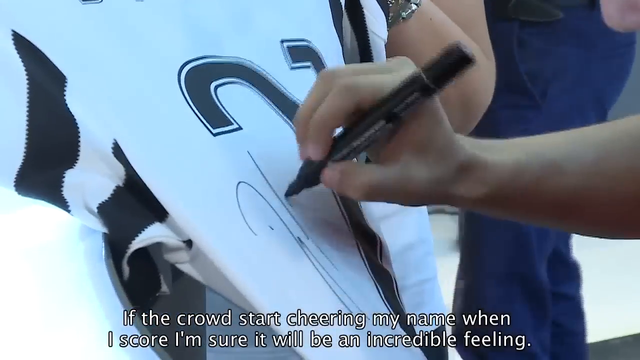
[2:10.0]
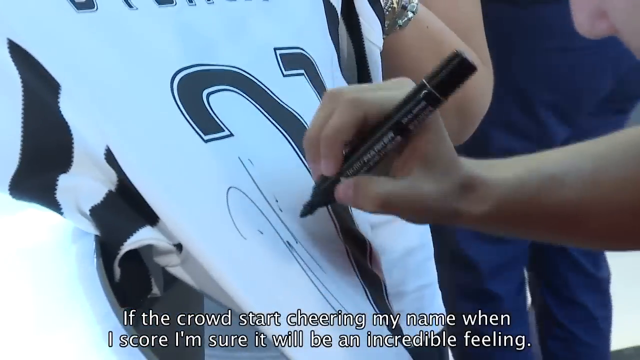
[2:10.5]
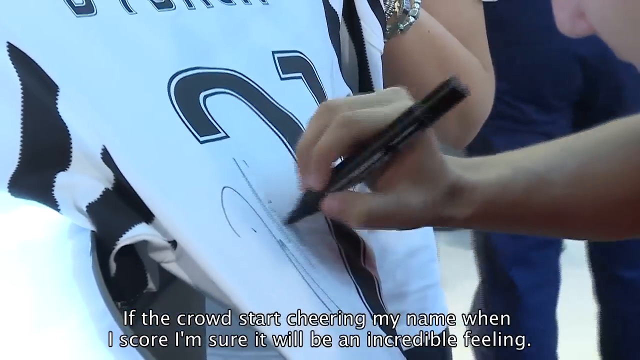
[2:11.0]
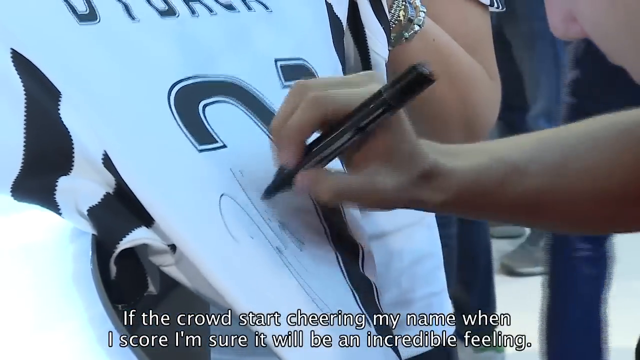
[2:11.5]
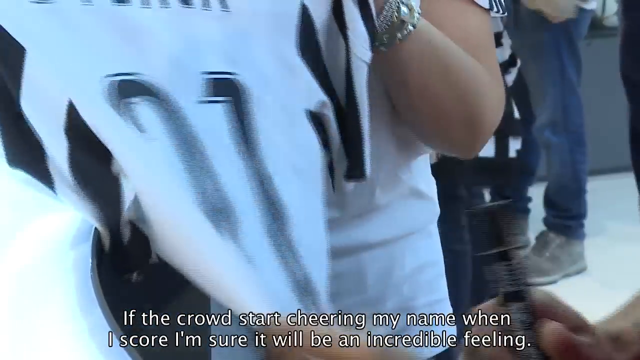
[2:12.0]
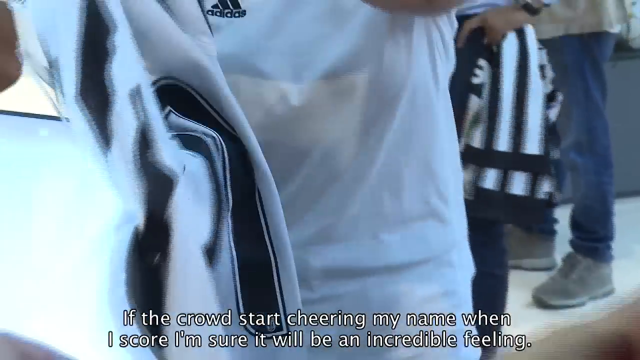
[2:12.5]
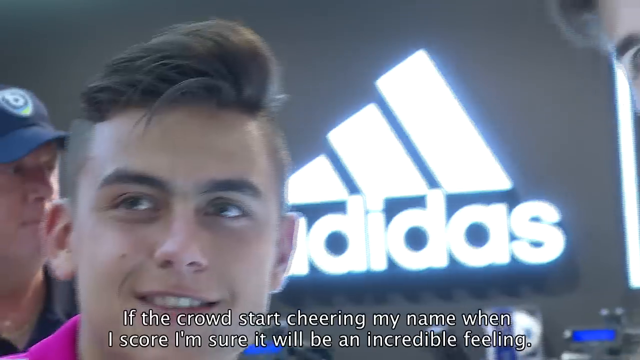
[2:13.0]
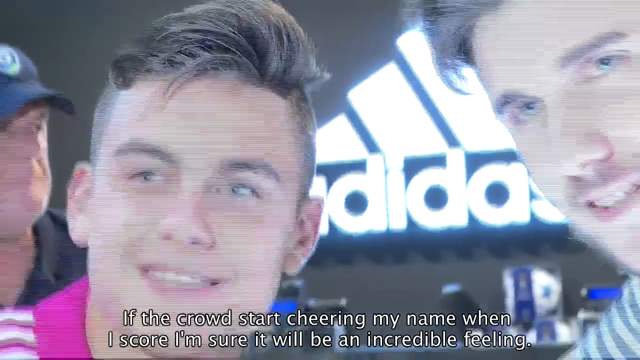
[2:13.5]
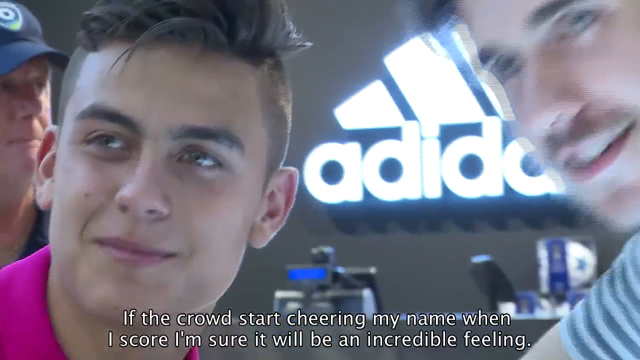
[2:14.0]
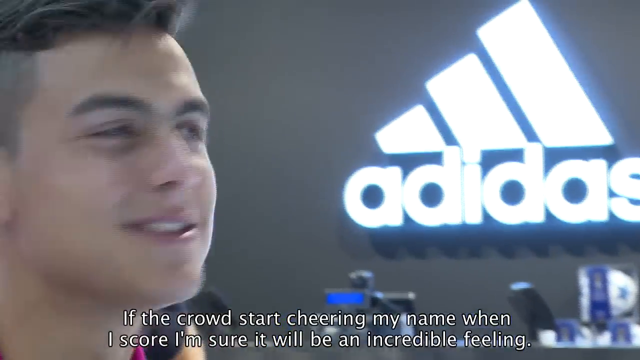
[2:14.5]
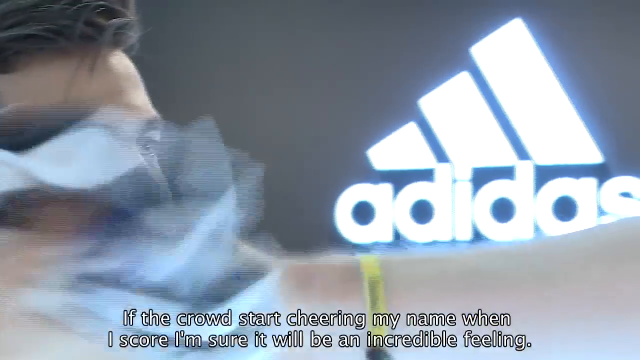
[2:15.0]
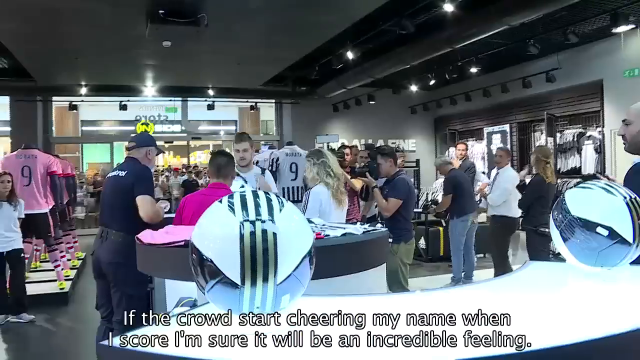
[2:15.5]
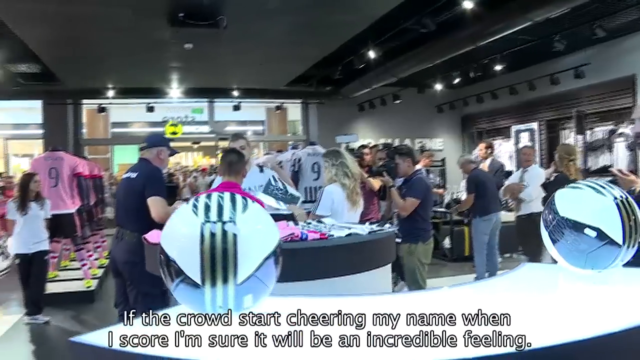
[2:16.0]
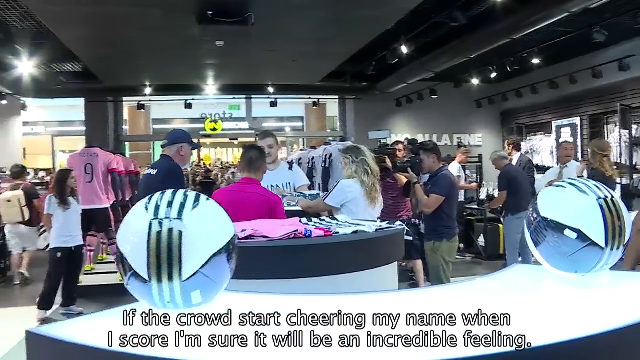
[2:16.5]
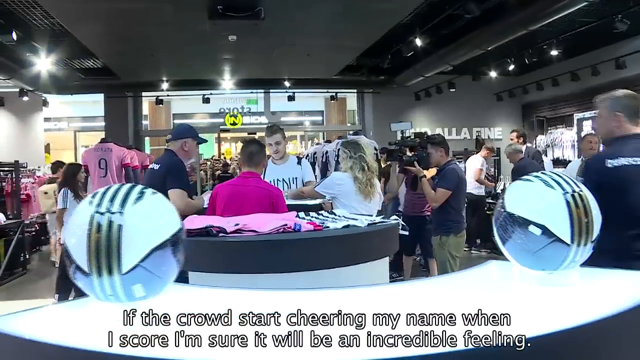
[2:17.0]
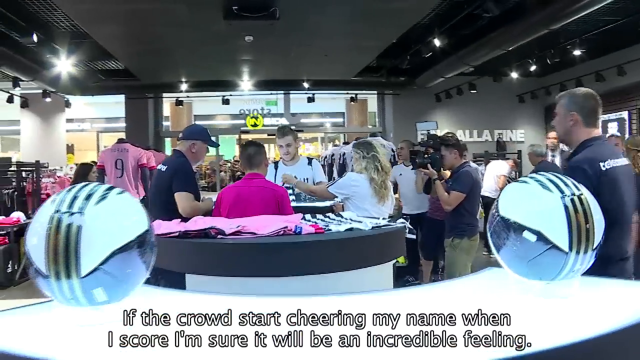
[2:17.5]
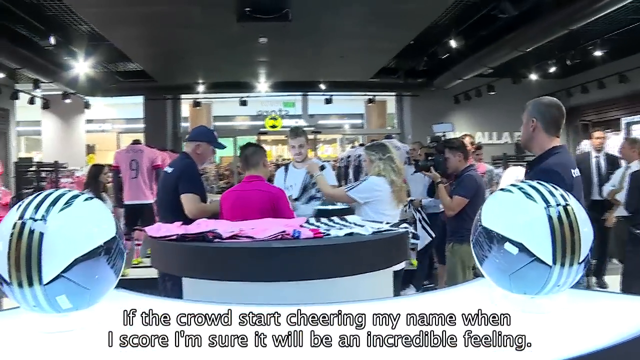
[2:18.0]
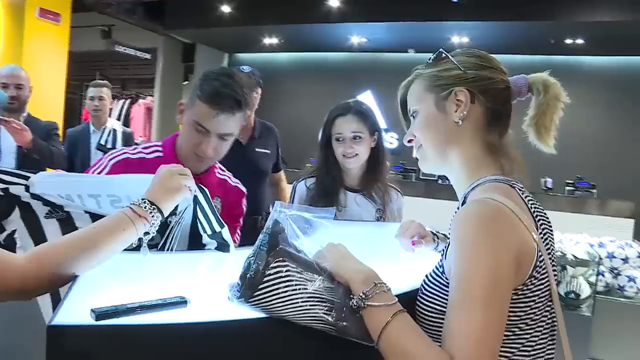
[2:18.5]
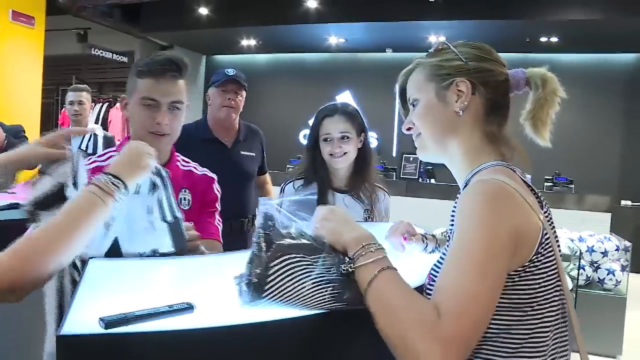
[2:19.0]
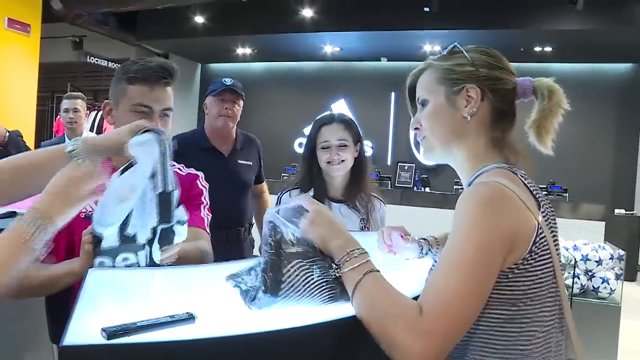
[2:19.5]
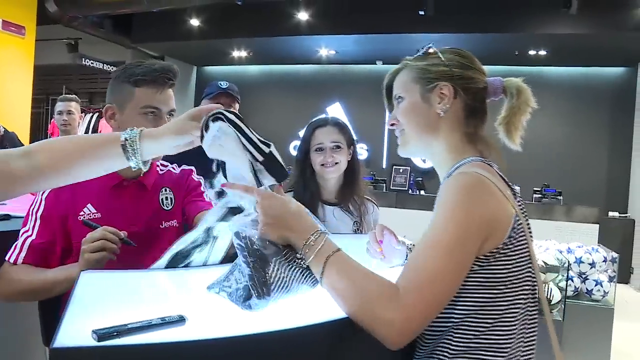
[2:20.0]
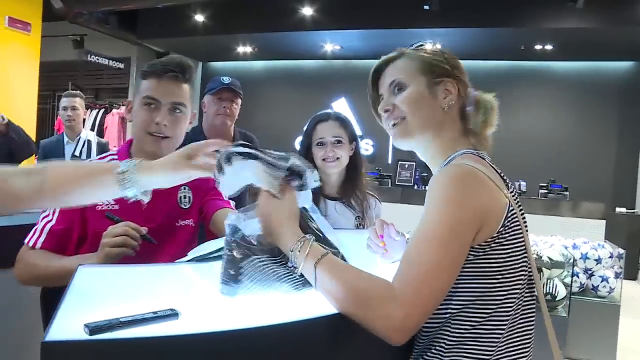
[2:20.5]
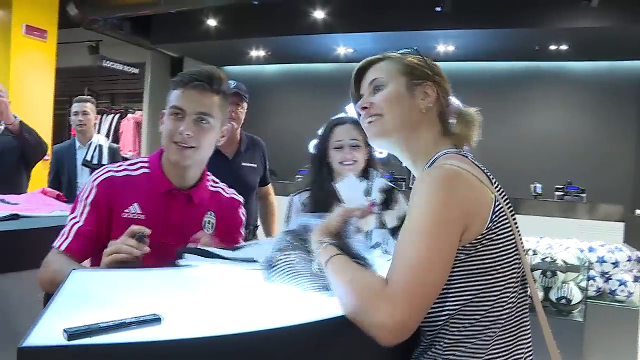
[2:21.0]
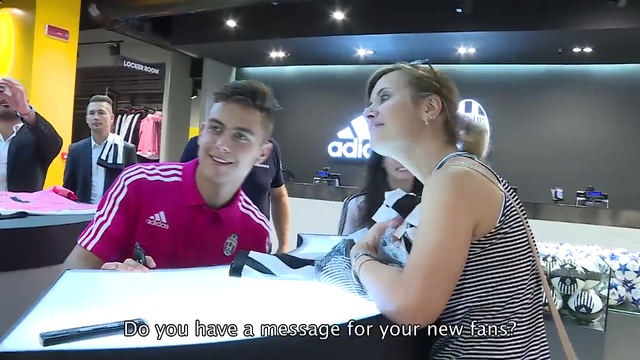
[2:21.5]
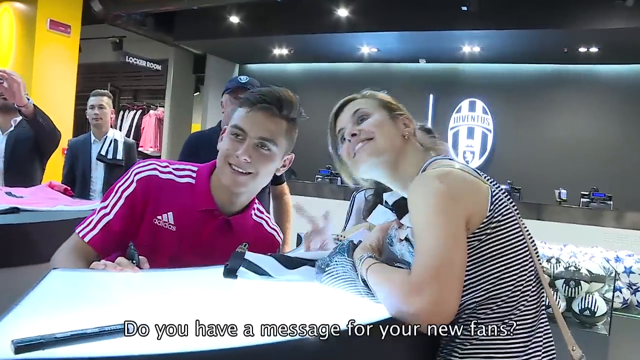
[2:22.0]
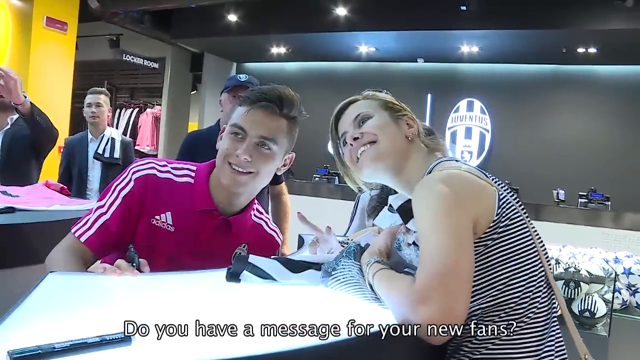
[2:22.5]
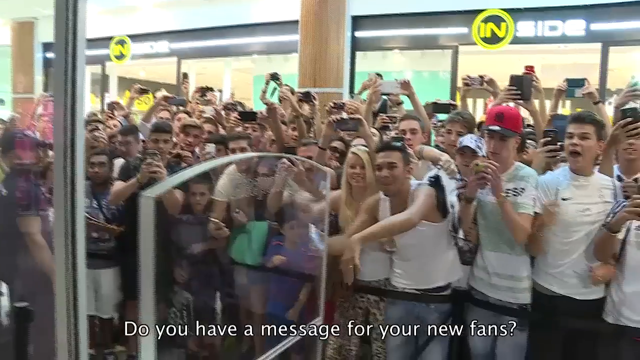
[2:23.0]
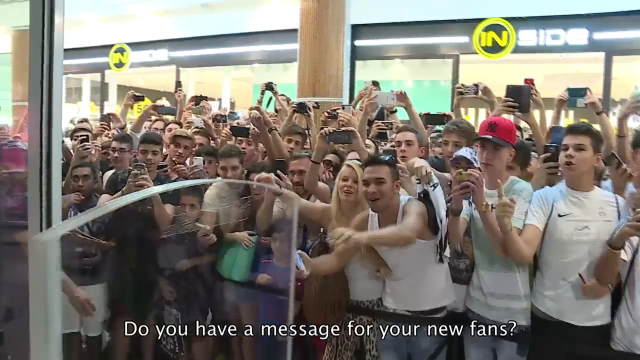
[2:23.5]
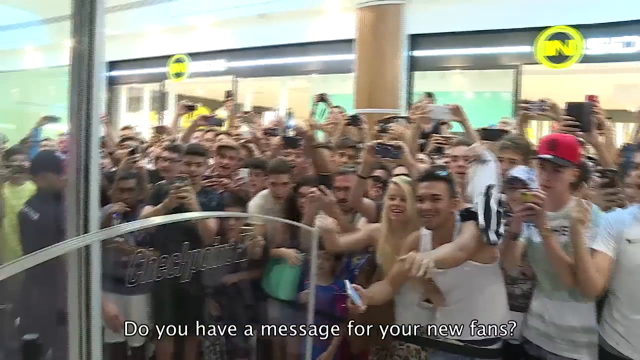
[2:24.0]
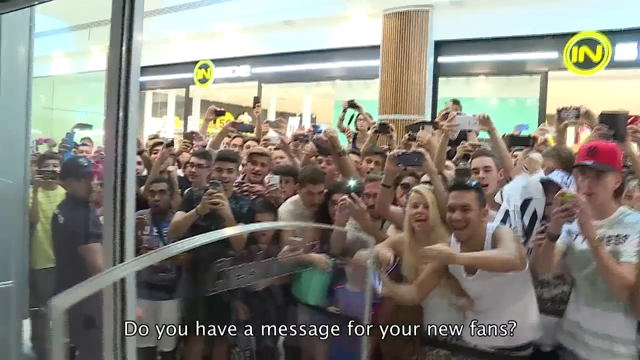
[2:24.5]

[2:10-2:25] Paolo continues signing jerseys as more fans take photos with him. Everyone, including the staff, is smiling, and he seems to be enjoying himself as he signs jerseys from the crowd. He shakes several people's hands and greets them. Several guests ask him questions, and he makes gestures as if greeting them. He is also shown in a separate interview. The signing event is held in an Adidas store.